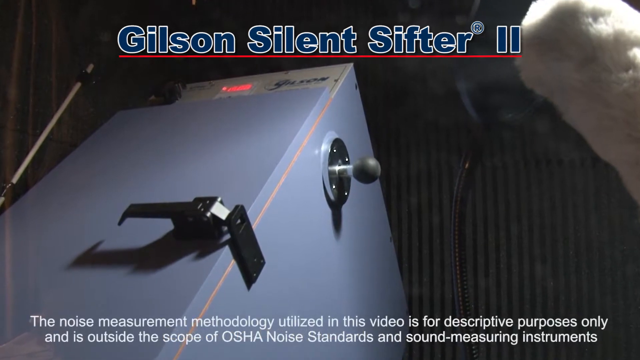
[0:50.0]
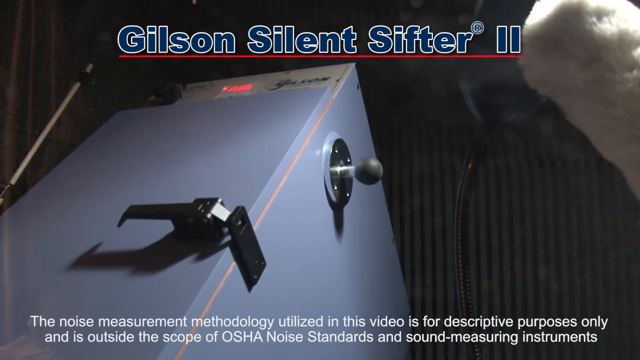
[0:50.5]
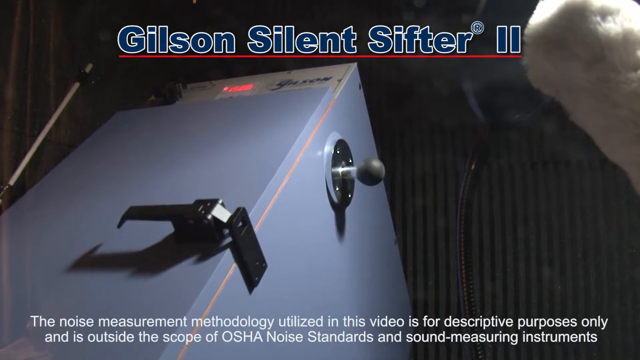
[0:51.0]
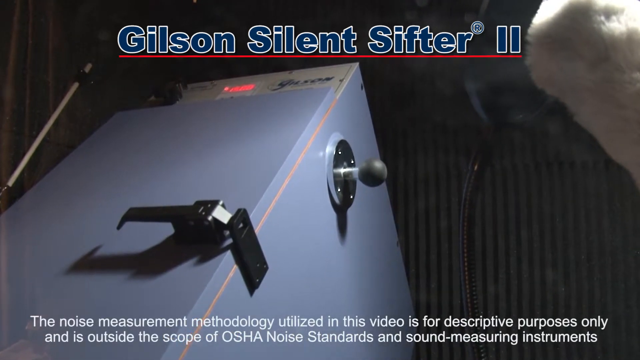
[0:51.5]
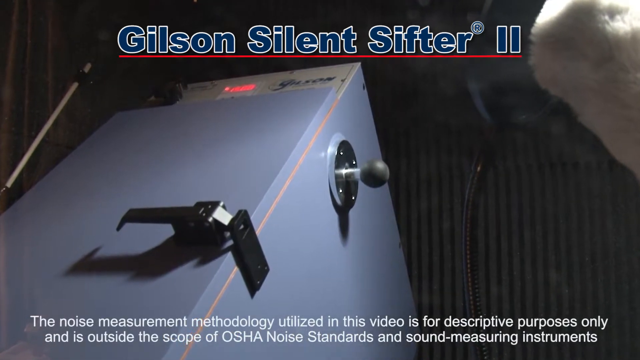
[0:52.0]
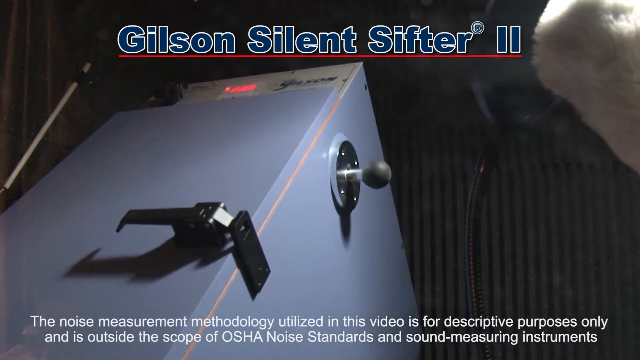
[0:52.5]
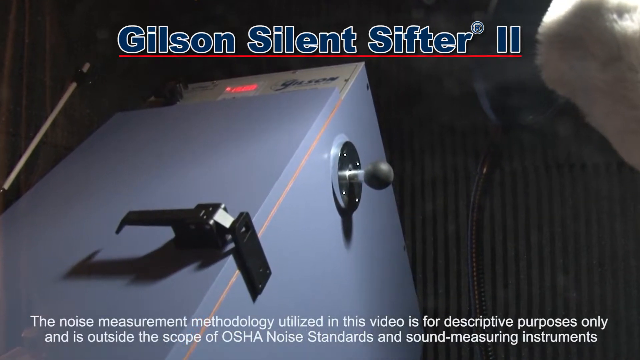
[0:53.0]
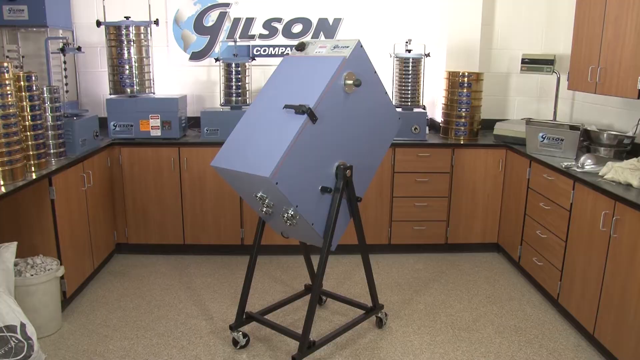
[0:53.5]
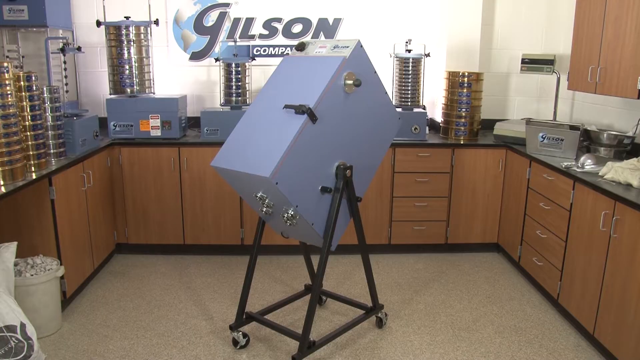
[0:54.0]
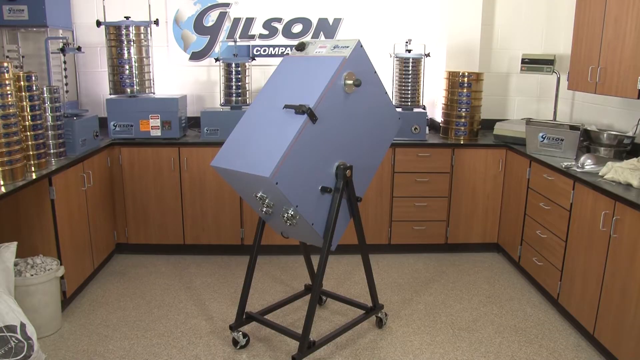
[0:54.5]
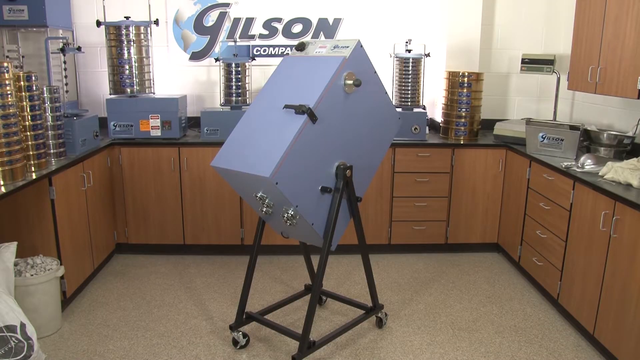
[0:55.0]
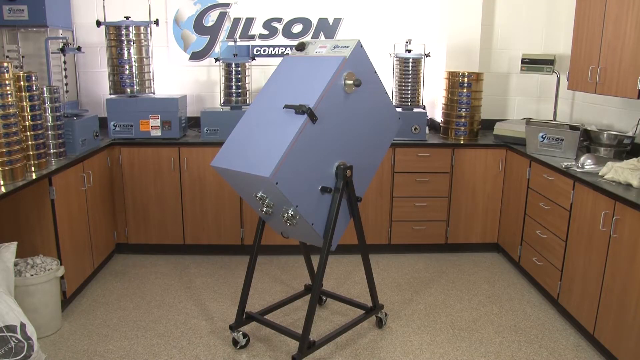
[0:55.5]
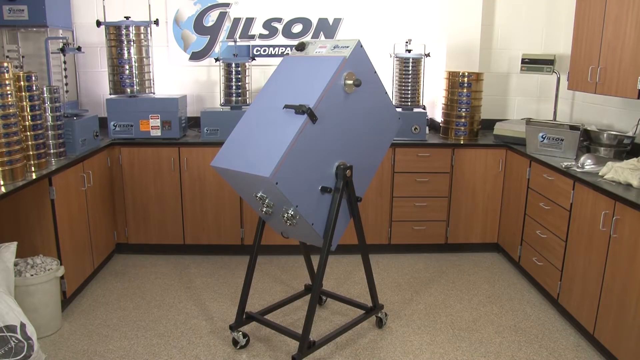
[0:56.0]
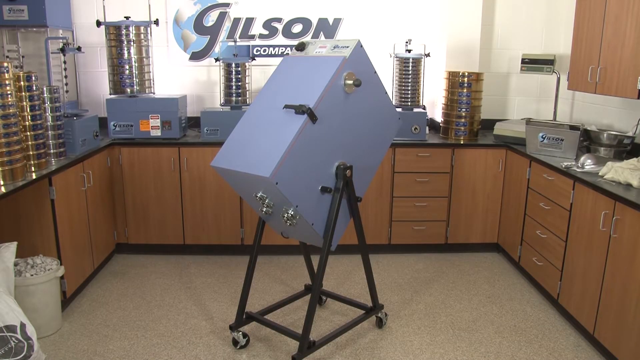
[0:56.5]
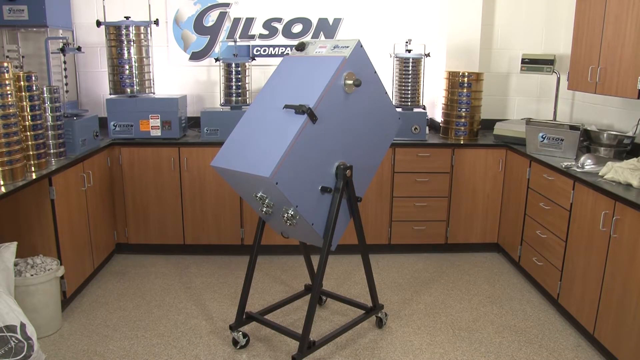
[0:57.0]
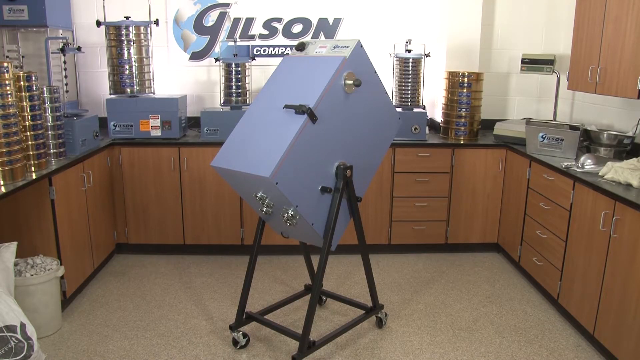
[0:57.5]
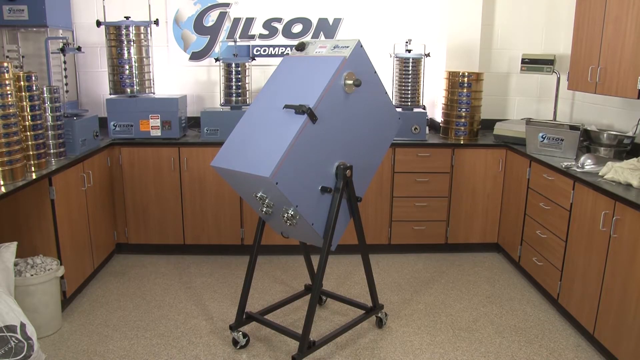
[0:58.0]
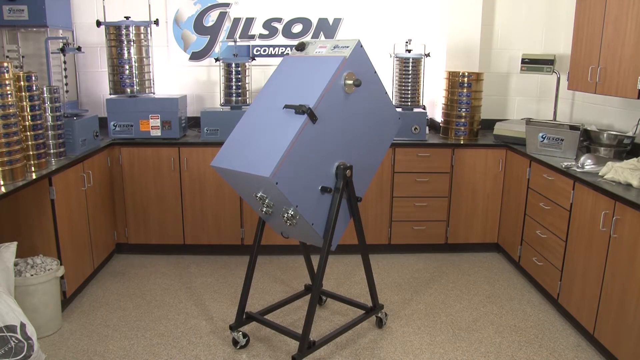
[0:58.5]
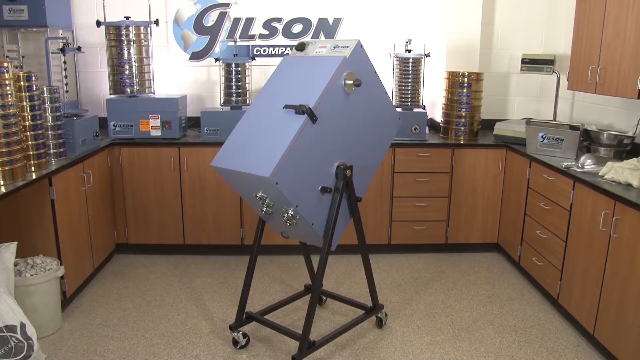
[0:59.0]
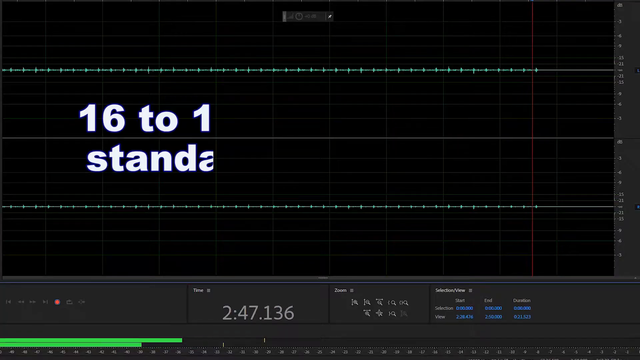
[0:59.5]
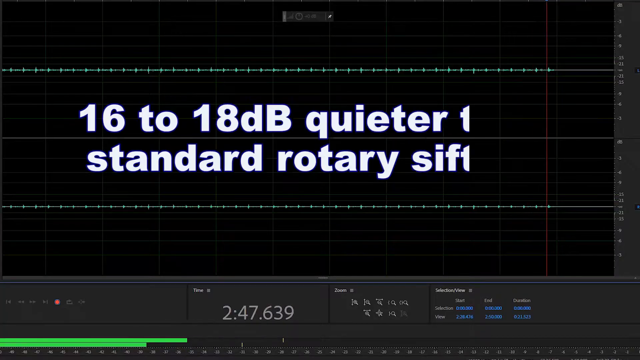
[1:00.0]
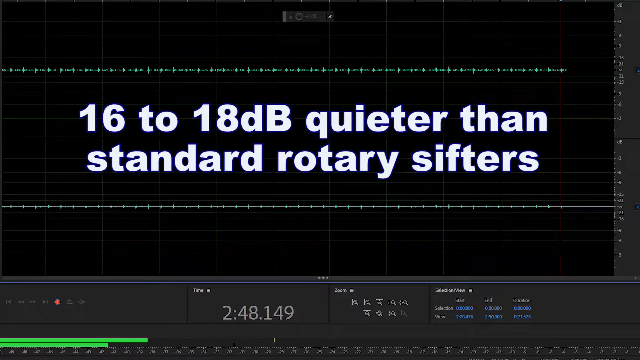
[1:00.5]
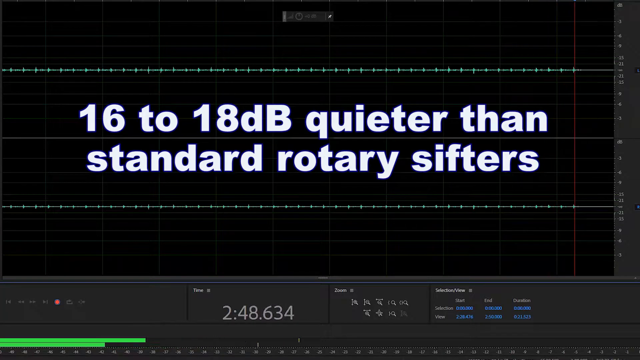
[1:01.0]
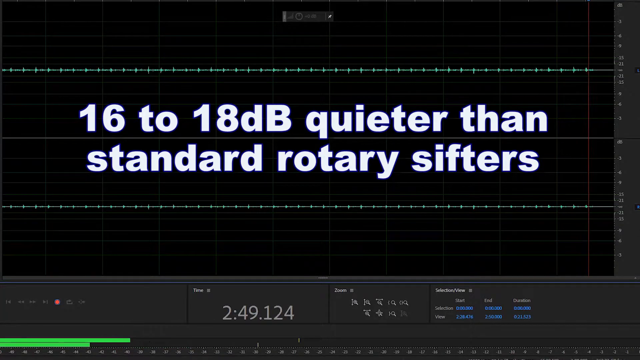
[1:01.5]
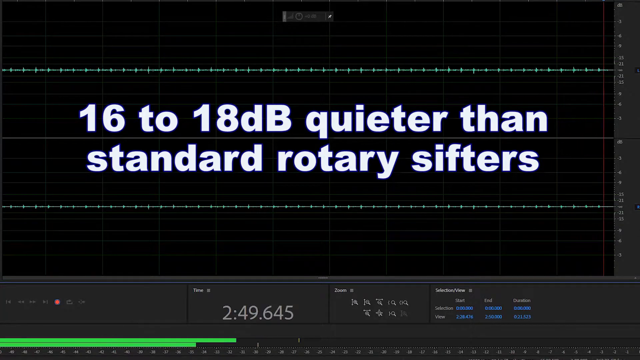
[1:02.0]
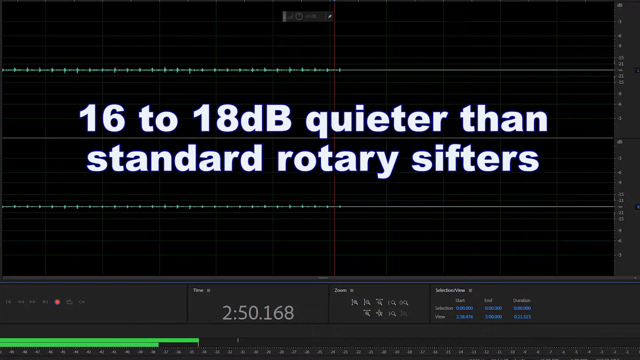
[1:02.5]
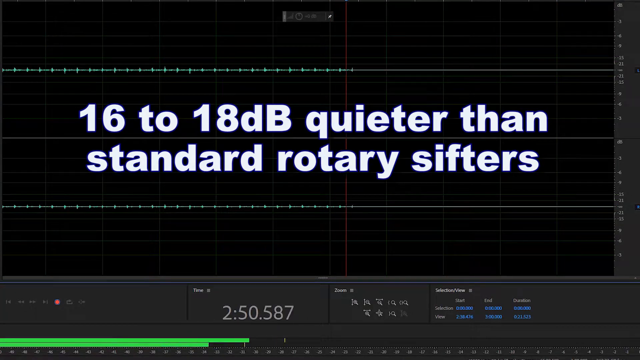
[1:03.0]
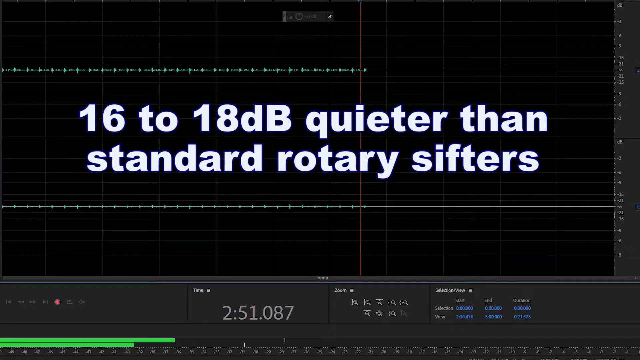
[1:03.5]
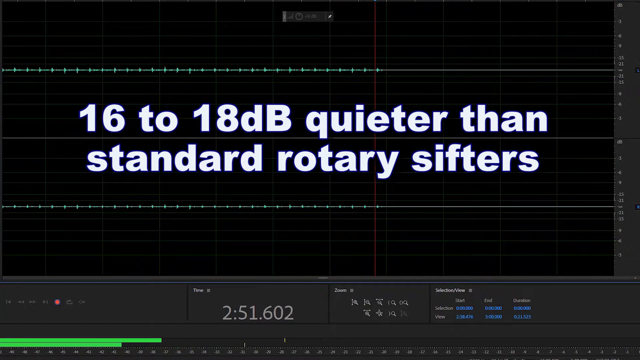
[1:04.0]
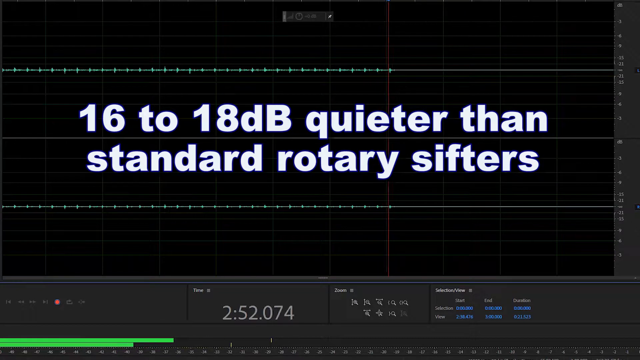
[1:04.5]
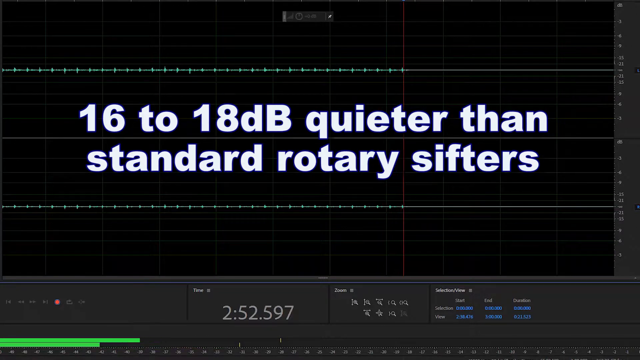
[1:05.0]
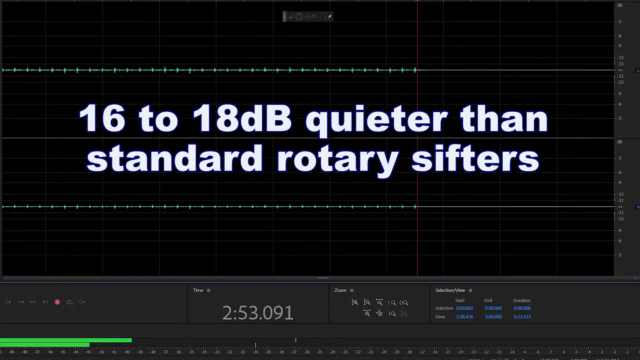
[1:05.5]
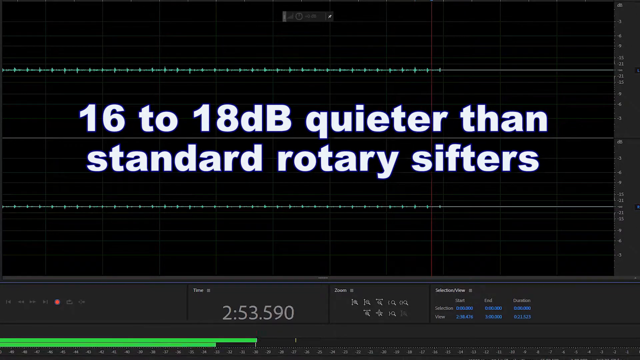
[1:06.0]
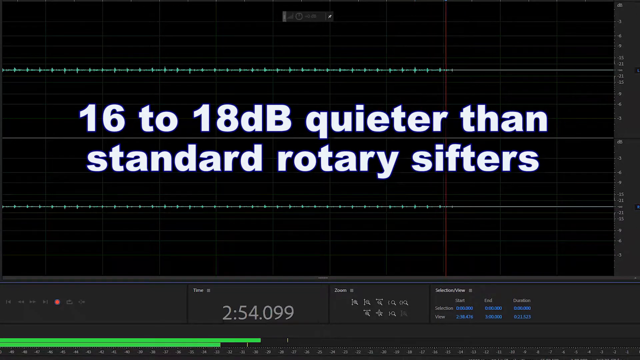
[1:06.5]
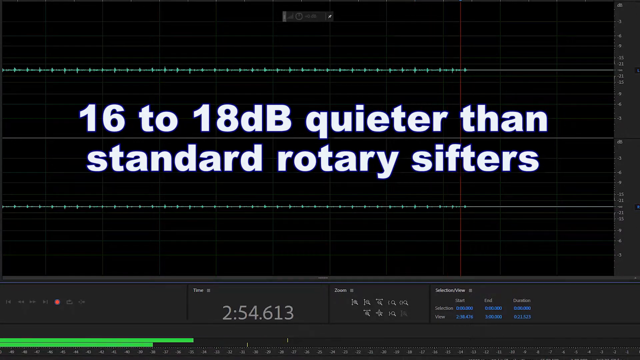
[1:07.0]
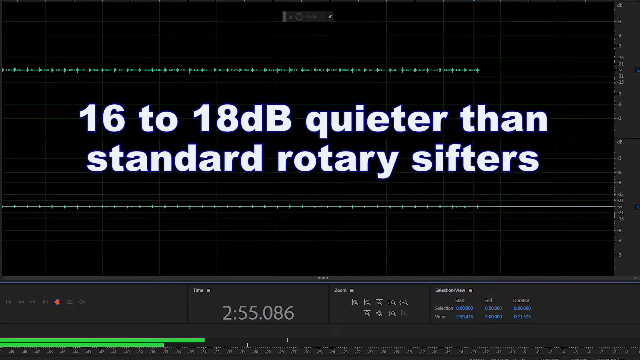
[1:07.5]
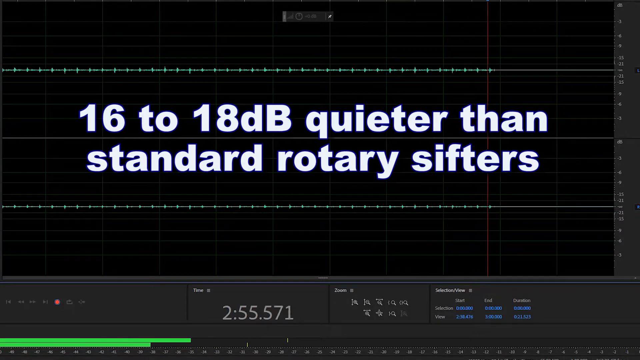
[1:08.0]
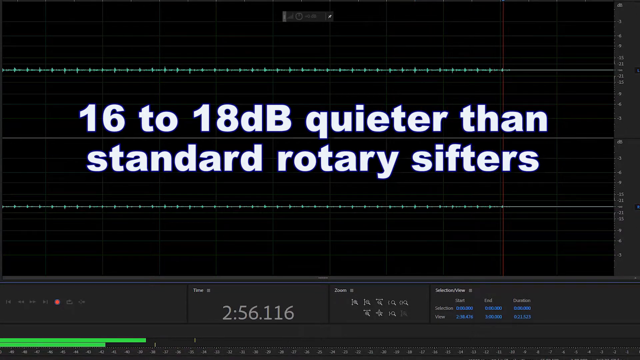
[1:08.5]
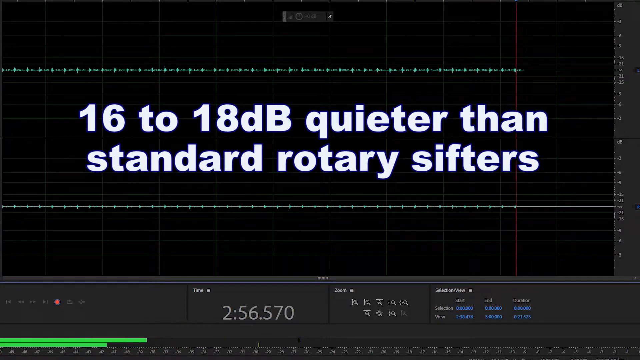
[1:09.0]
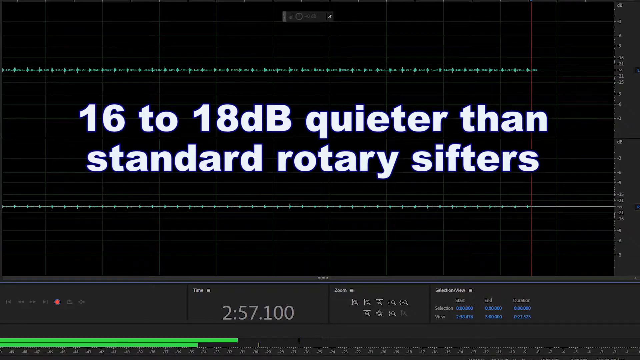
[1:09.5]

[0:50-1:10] What appears to be a Gilson sifter tool is shown. There is something like a locker, along with a portal, a locking system and lights. There is something apparently microscopic or similar that is 16 to 18 dB quieter than a standard locker sifter; it is possibly a reader that measures sound through these machines.